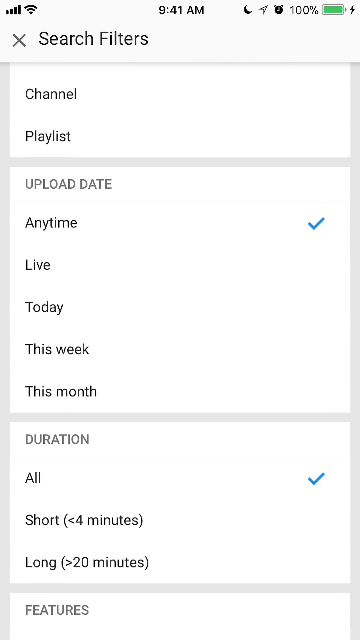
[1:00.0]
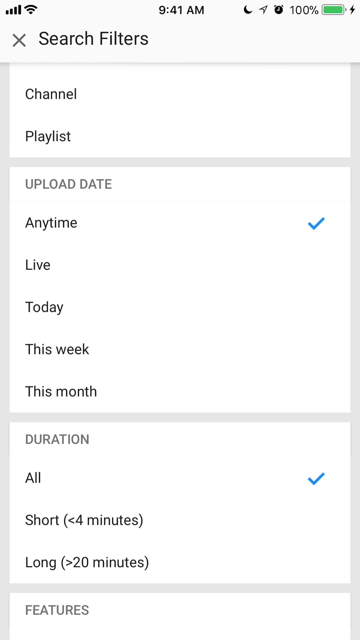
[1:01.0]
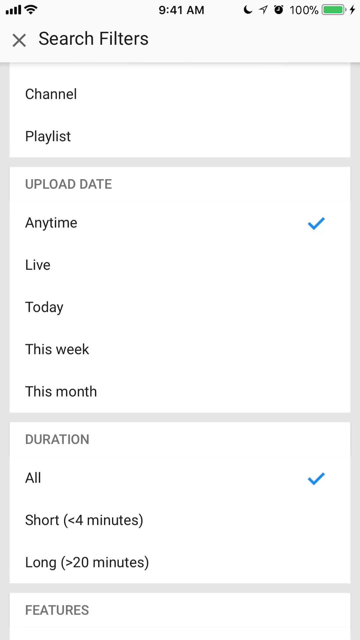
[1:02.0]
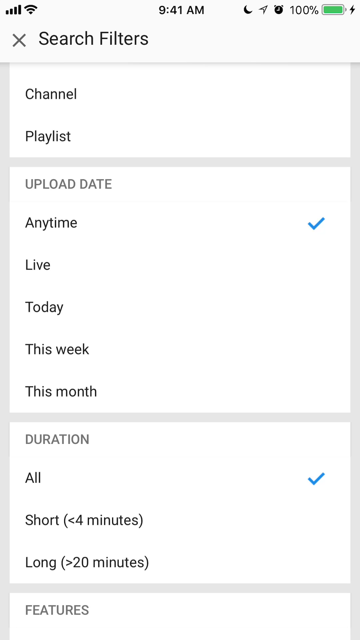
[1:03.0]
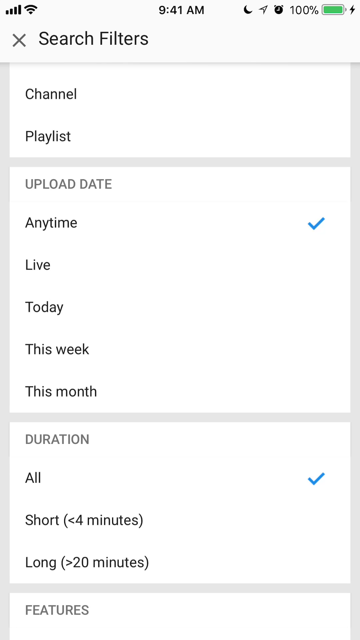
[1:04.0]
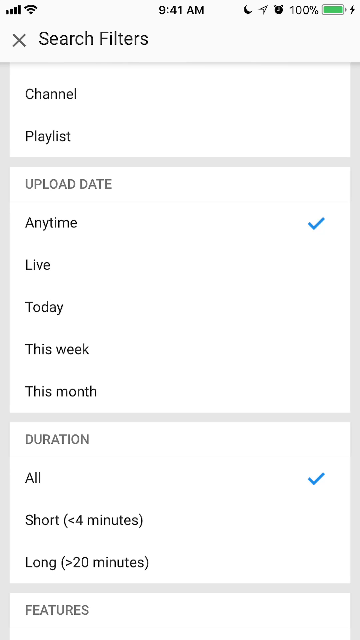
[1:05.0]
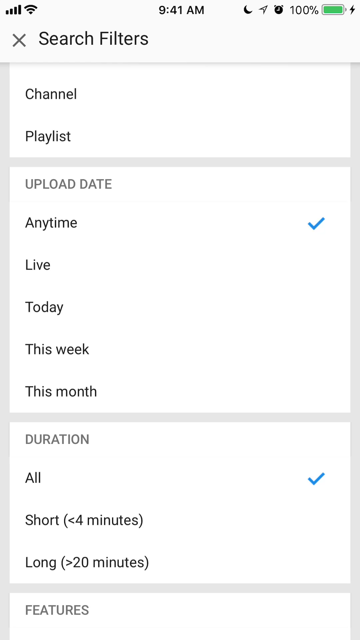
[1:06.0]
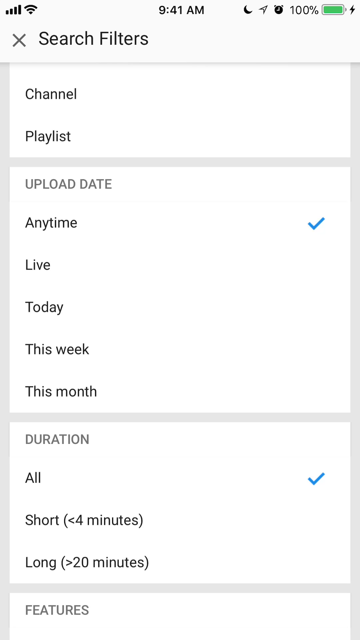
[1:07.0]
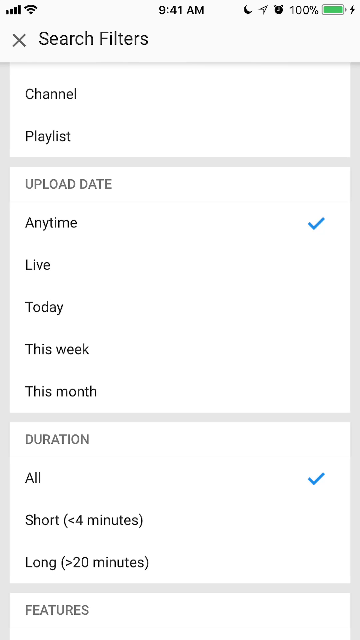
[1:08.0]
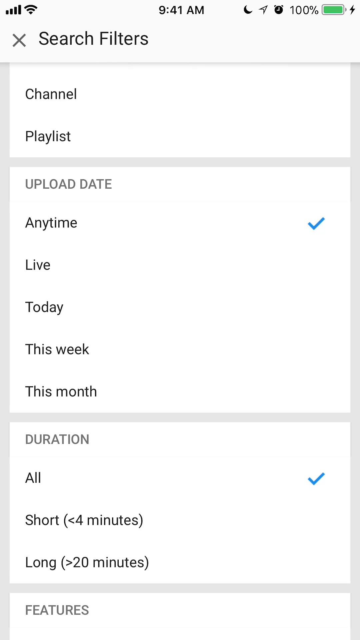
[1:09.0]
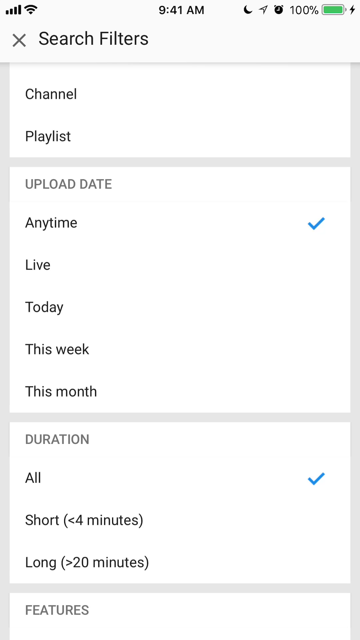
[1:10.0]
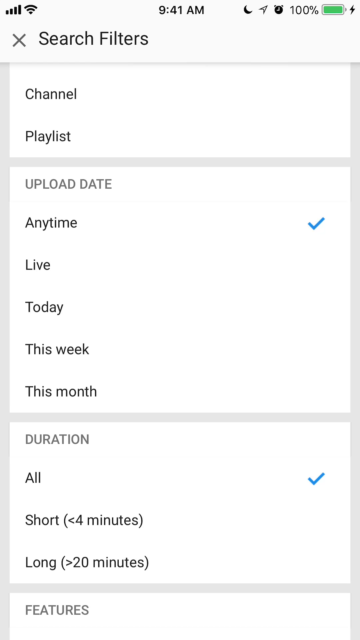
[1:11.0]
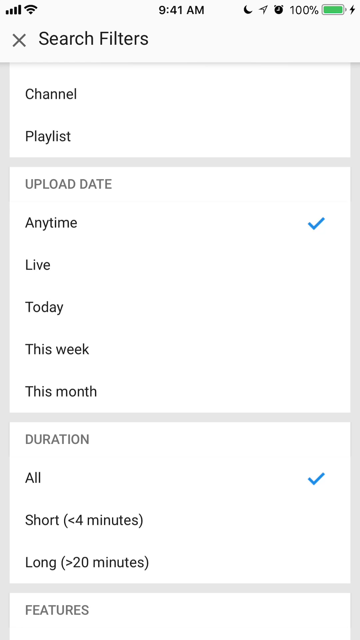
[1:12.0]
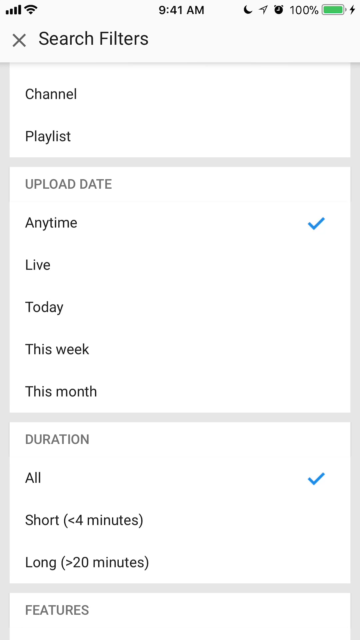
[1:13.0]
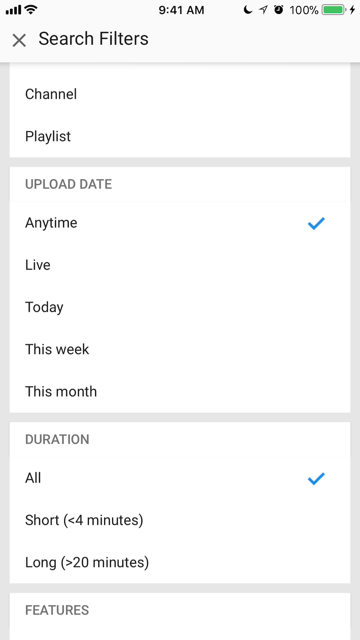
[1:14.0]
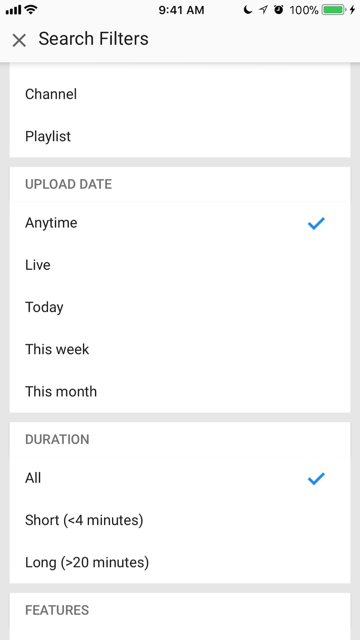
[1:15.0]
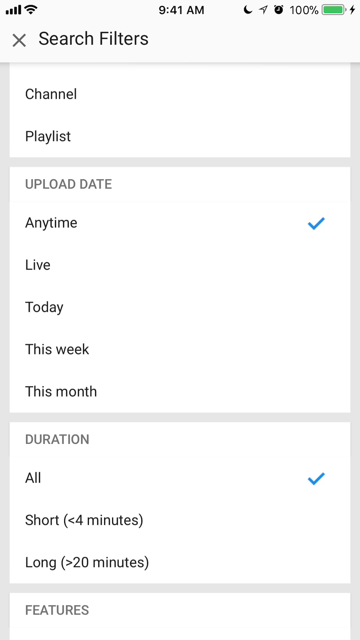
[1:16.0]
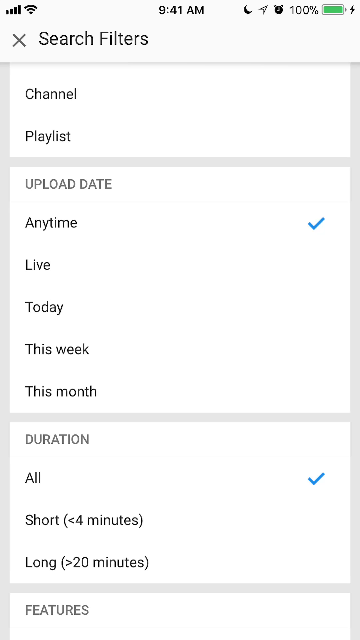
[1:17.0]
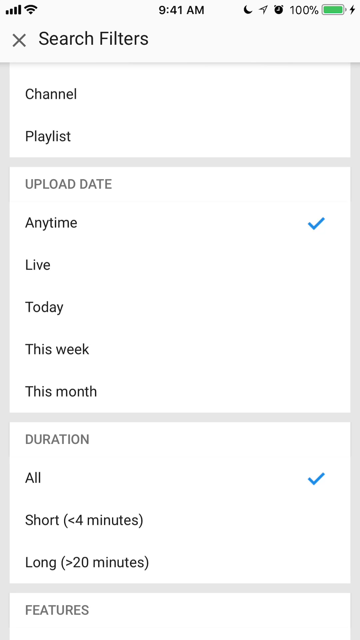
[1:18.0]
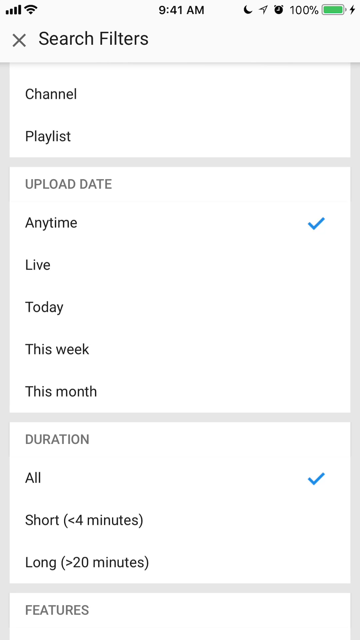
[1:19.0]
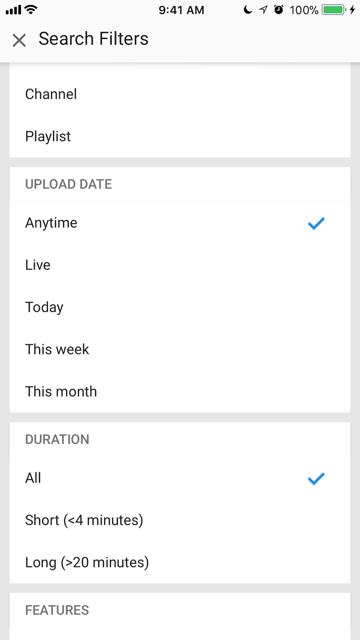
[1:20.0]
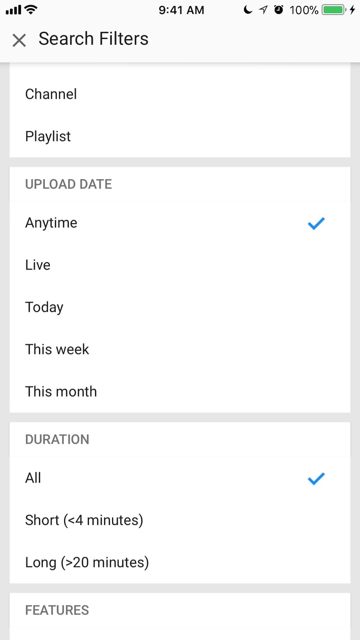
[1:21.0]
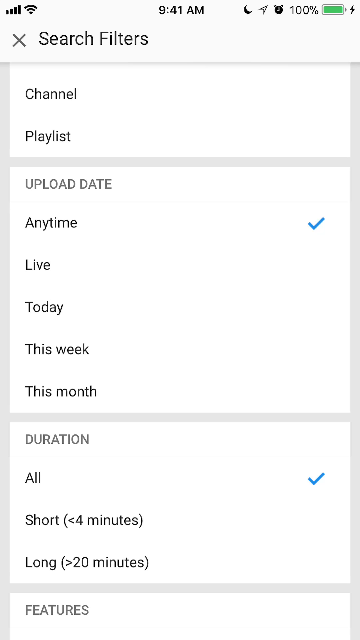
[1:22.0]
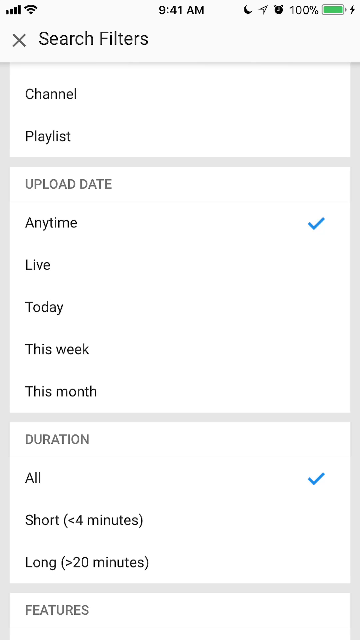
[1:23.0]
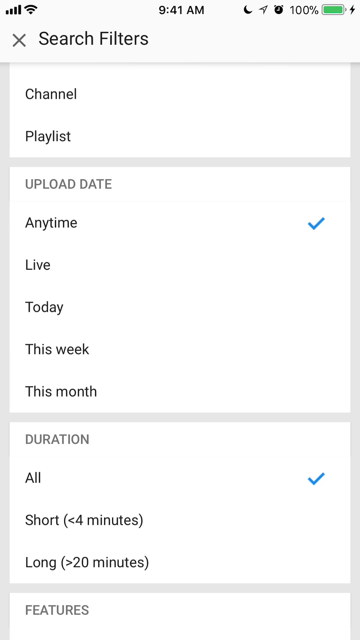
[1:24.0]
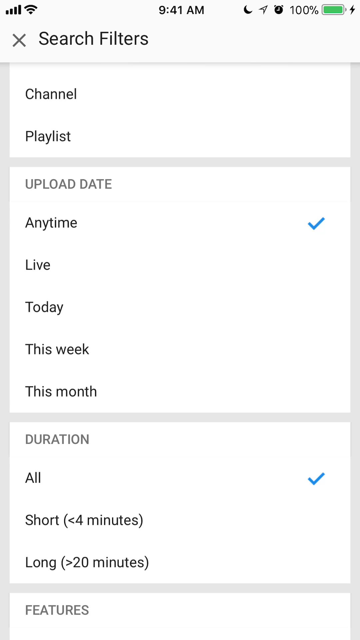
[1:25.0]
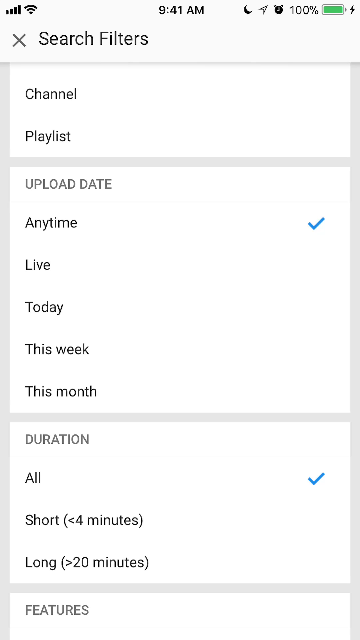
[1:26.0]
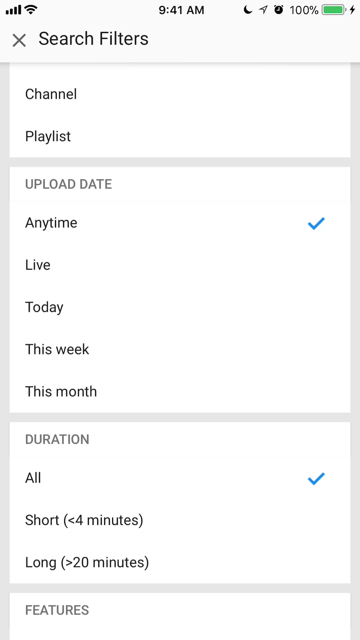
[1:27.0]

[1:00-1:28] YouTube search results are shown, with sections for channel and playlist and two filter categories below them labeled "upload date" and "duration". The upload date section has five options, including live, today, this week, and this month, and the person makes a selection. The duration section has two options, "all", which is selected, and "short"; the person selects all.